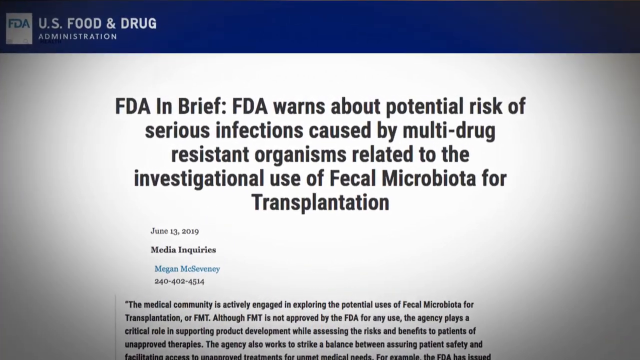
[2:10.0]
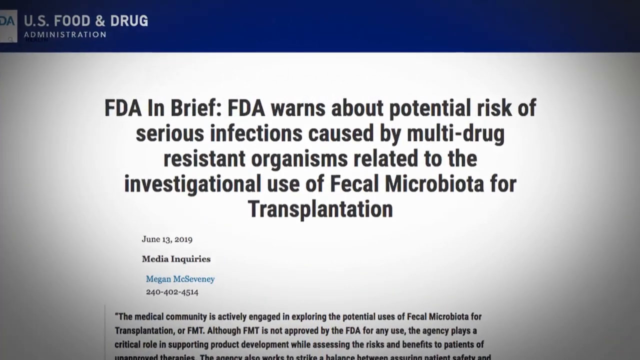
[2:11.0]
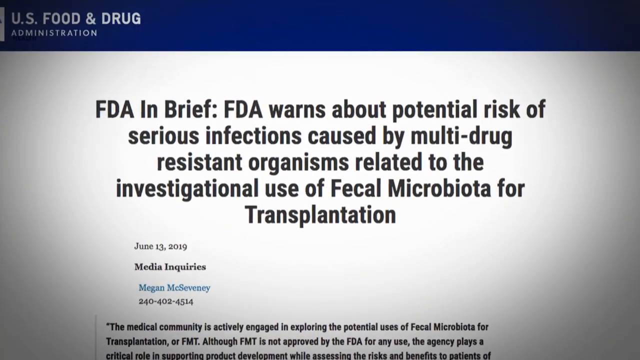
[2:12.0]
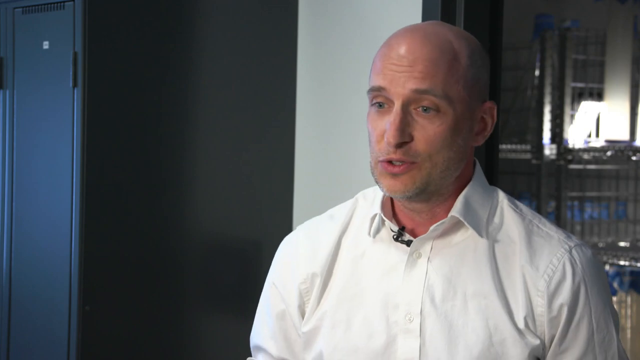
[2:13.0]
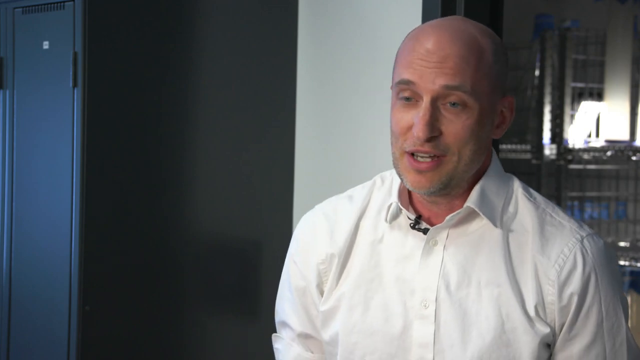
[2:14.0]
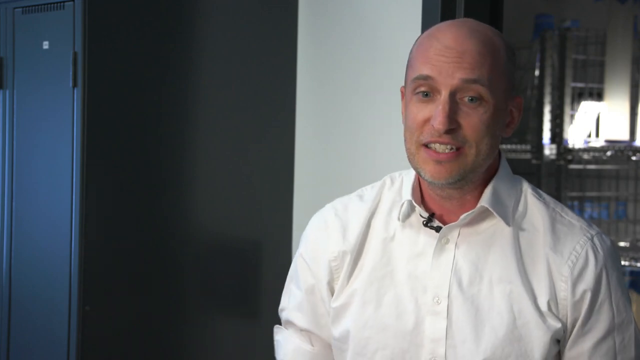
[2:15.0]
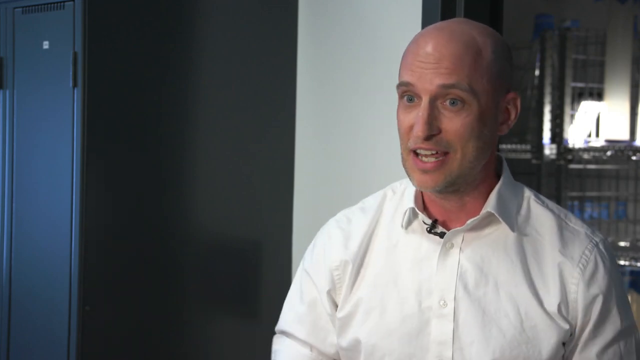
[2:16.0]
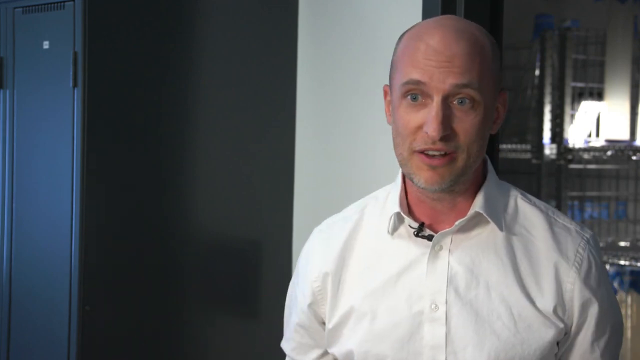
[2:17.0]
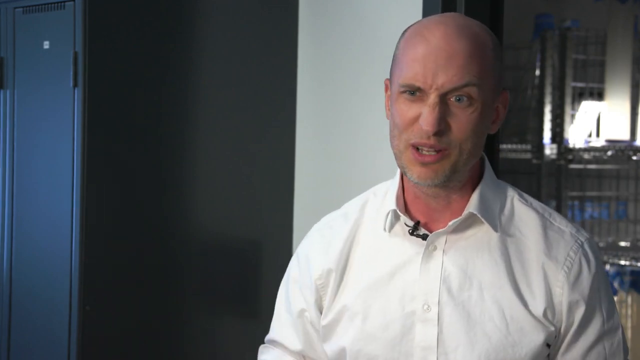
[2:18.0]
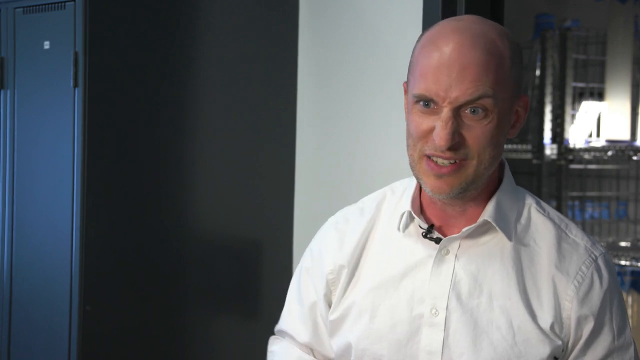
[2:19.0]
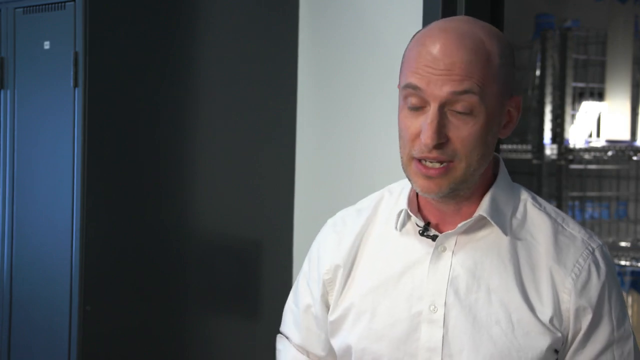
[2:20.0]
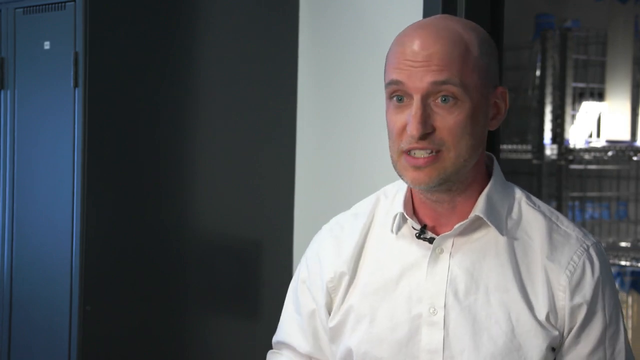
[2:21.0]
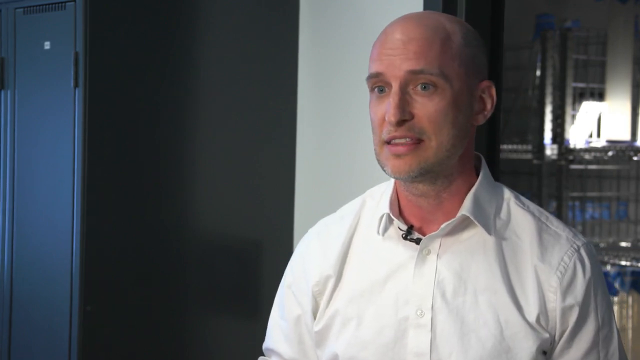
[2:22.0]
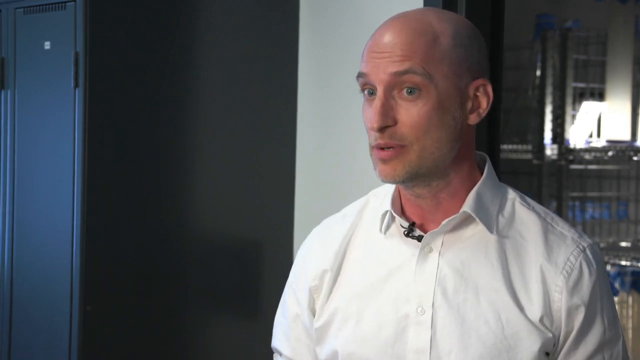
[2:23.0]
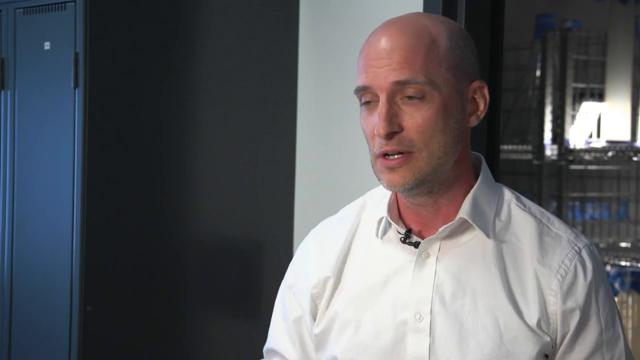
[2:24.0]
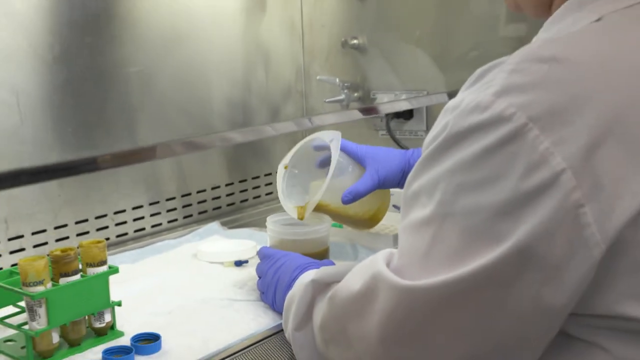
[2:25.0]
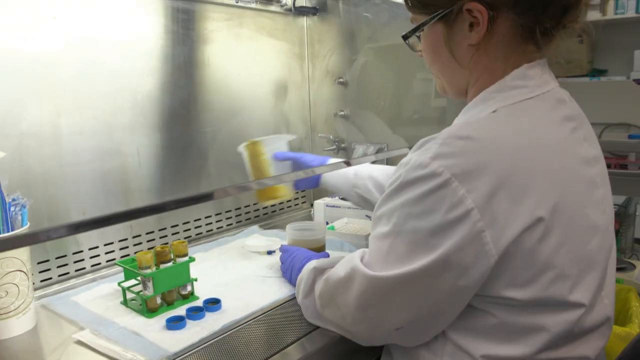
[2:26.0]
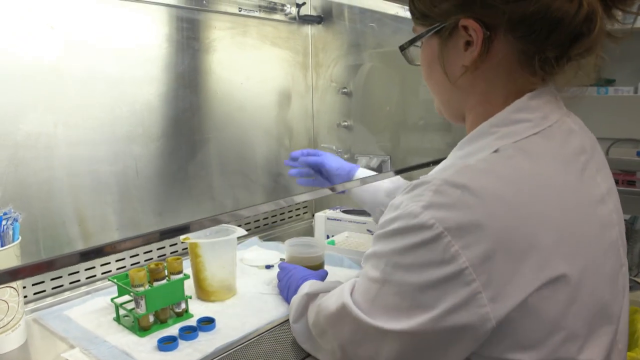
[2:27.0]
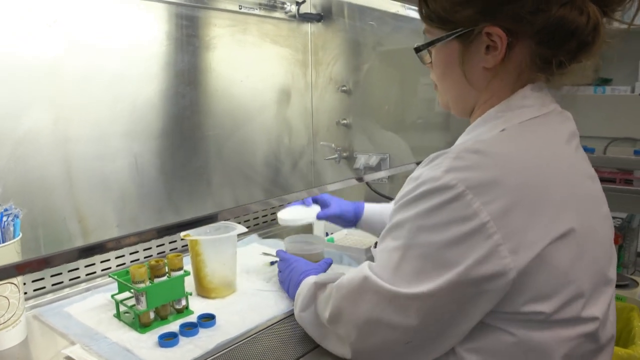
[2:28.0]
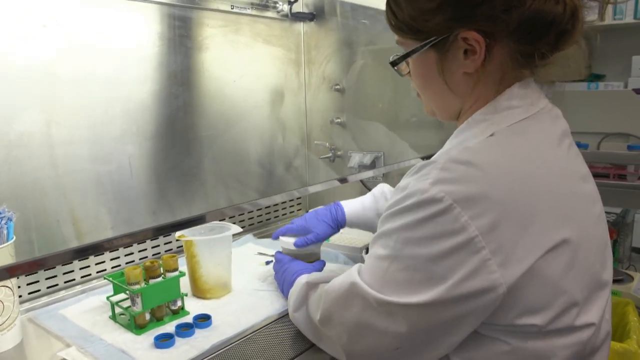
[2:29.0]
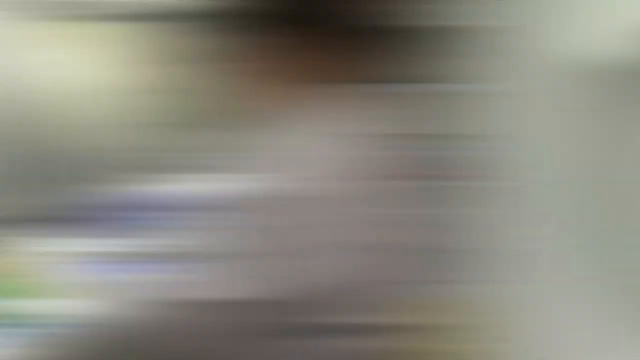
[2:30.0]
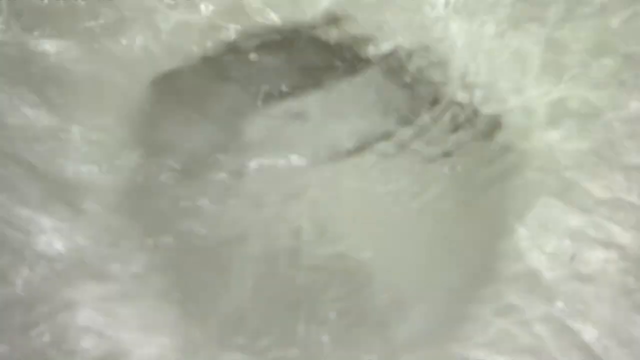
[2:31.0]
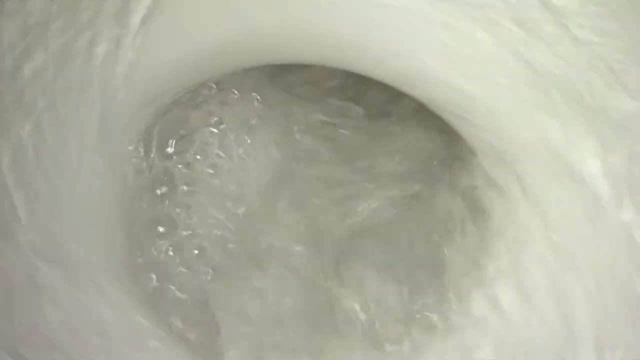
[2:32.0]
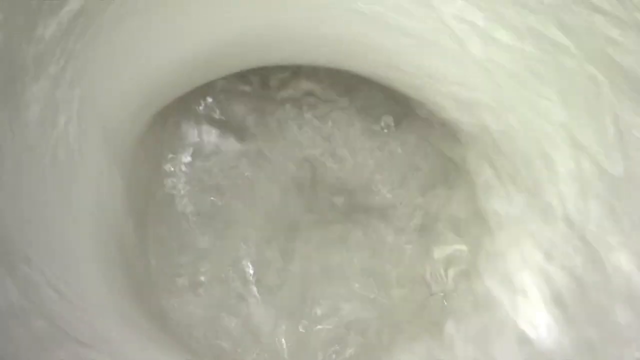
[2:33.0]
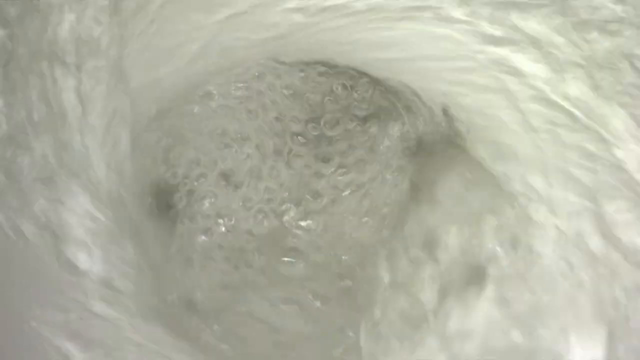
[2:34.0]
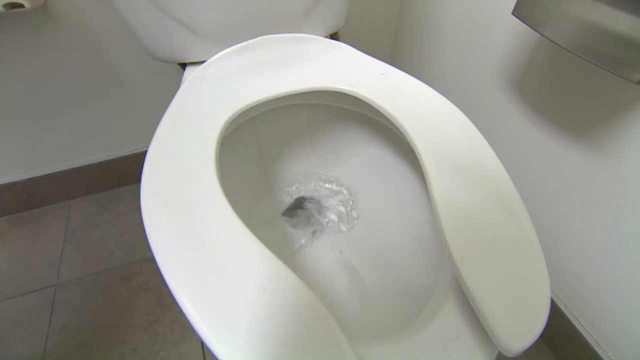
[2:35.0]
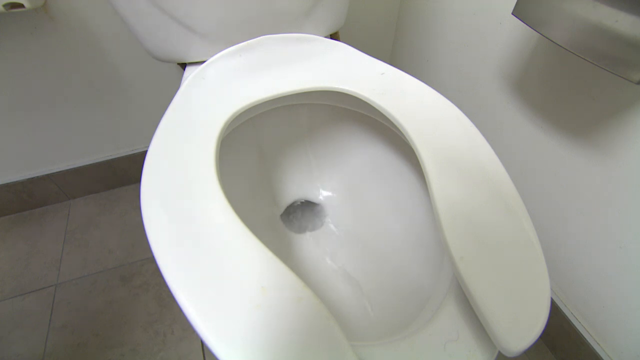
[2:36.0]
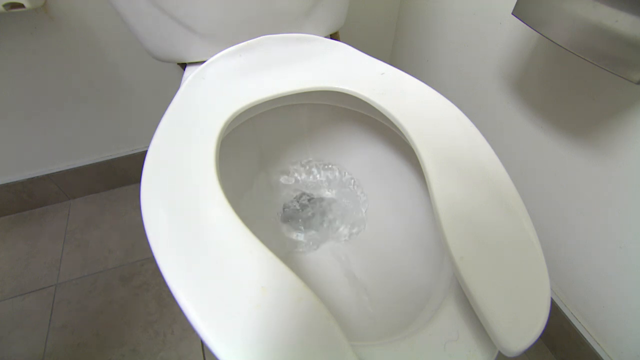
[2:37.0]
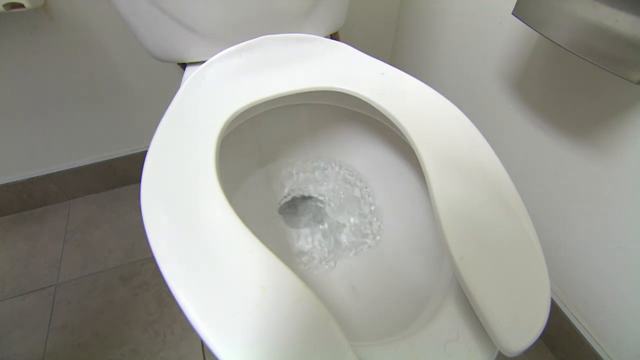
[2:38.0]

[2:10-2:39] The camera zooms in on the blue-headed FDA article warning about the risk of serious infections. The video then returns to the interview with the bald, pale-complexioned man in the white shirt with the small microphone on his right collar, who looks off to his right or left, talking to the interviewer behind the camera. He moves his hands upwards and outwards with palms open as he talks, tilting his head slightly to the left and slightly shaking it. He grimaces for a second or so, then tilts his head to the right and nods slightly as he talks to the interviewer. The video goes back to the doctor in white overalls, blue gloves and glasses, pouring green liquid from a larger container into a smaller container. Next is a close-up of a white background with liquid swirling into what looks like a hole in the middle of the white item. The camera zooms out to reveal water being flushed down a toilet, followed by a close-up of the toilet seat. The water flushes down and then refills slightly.